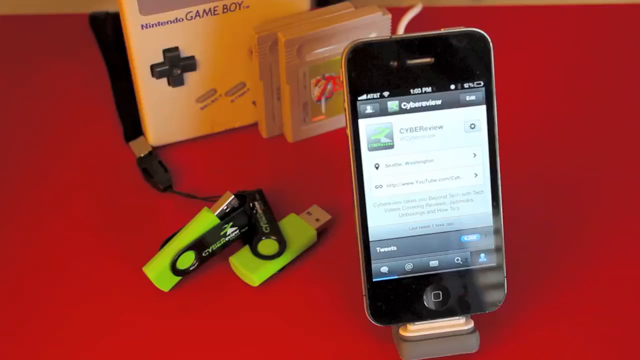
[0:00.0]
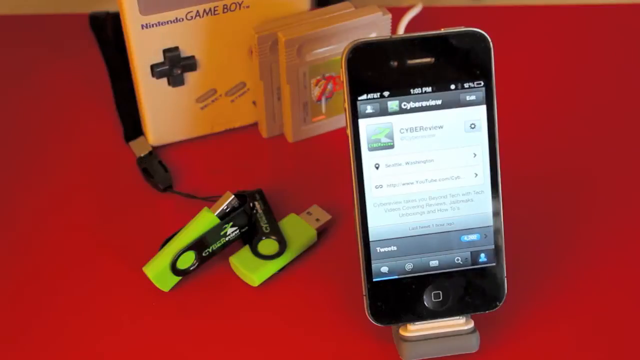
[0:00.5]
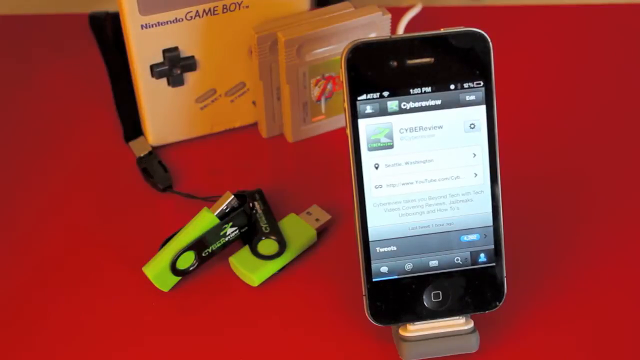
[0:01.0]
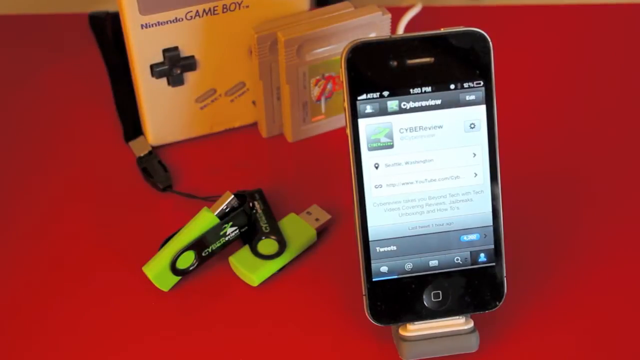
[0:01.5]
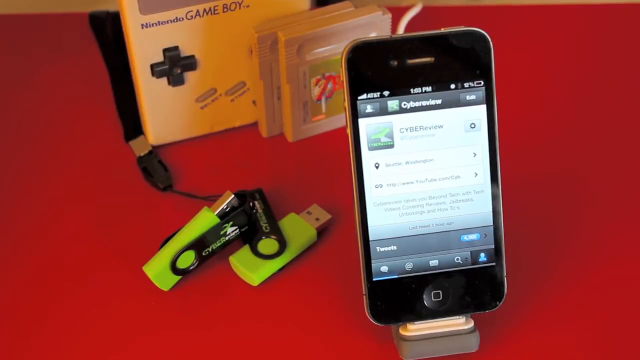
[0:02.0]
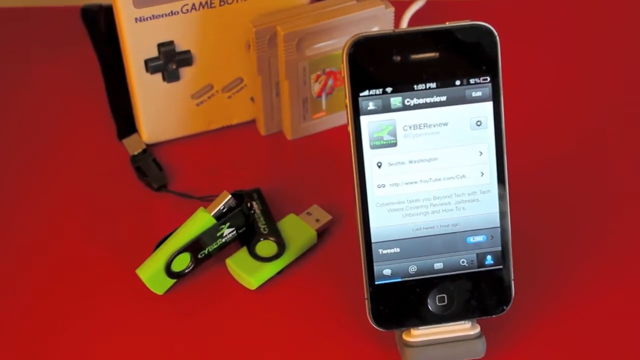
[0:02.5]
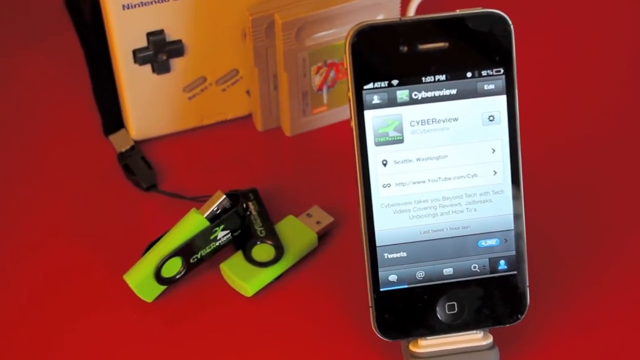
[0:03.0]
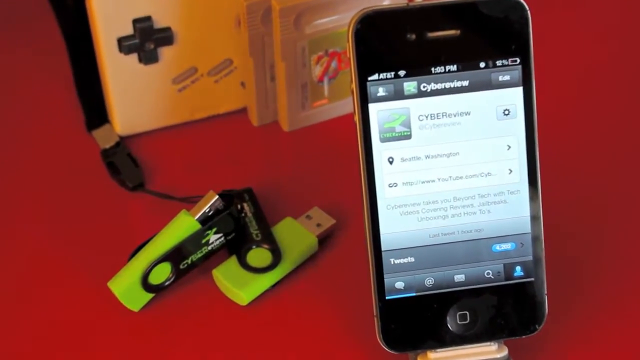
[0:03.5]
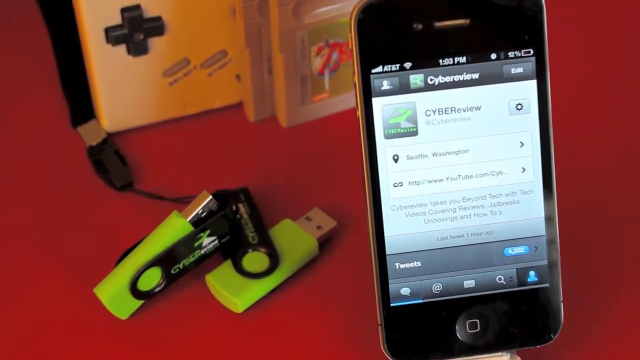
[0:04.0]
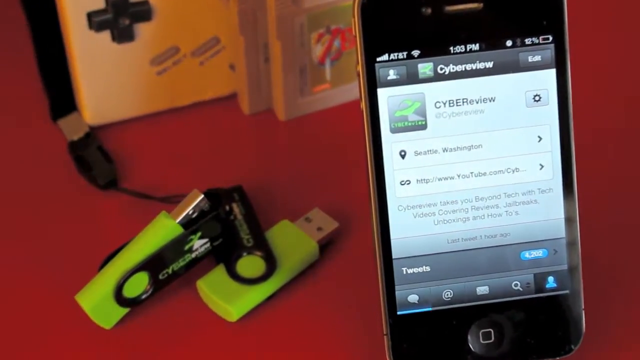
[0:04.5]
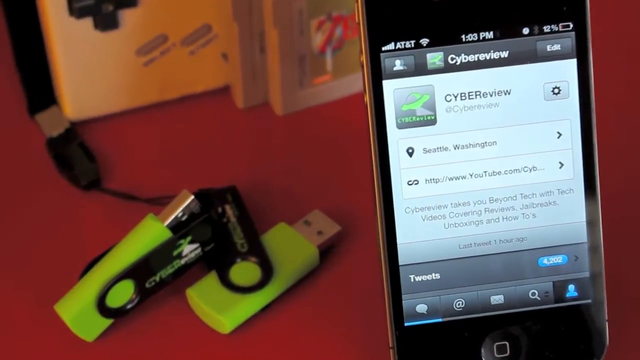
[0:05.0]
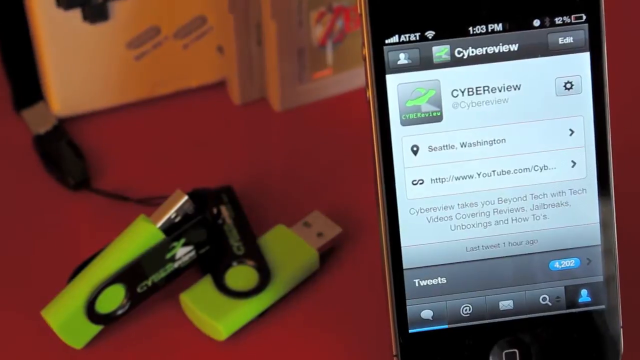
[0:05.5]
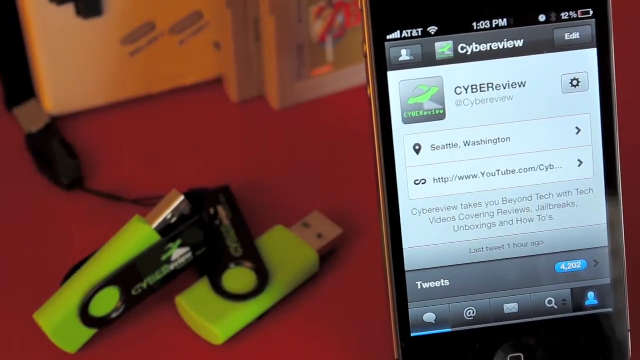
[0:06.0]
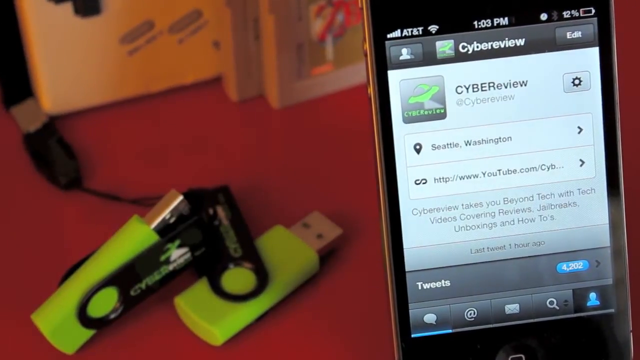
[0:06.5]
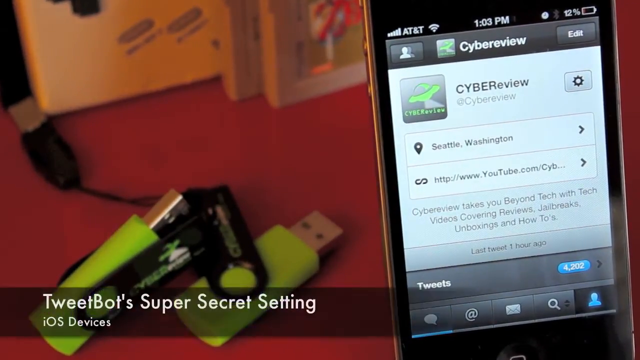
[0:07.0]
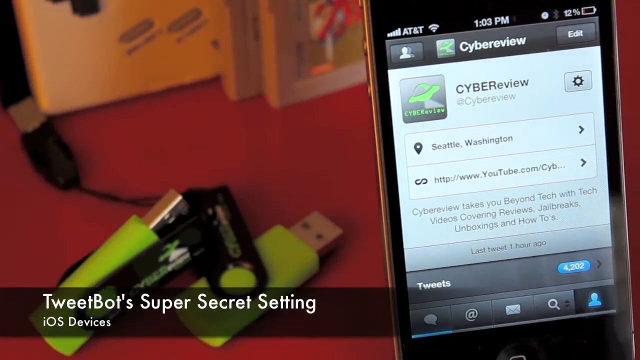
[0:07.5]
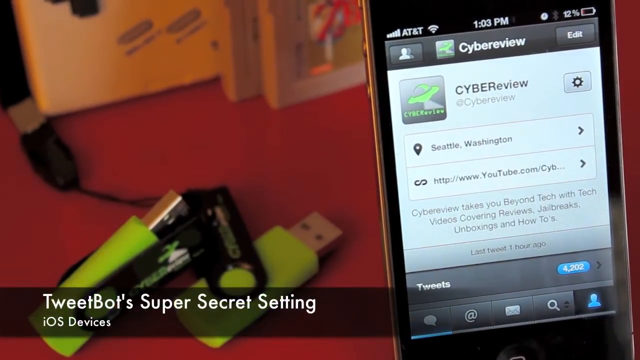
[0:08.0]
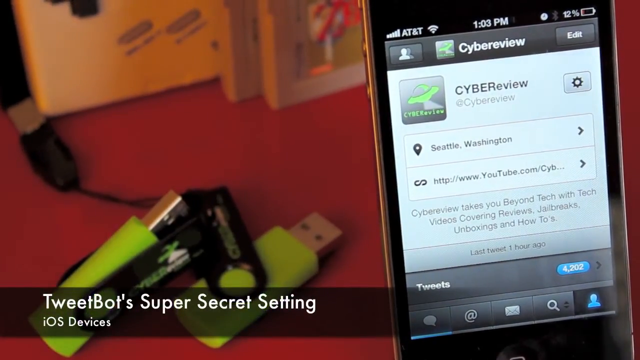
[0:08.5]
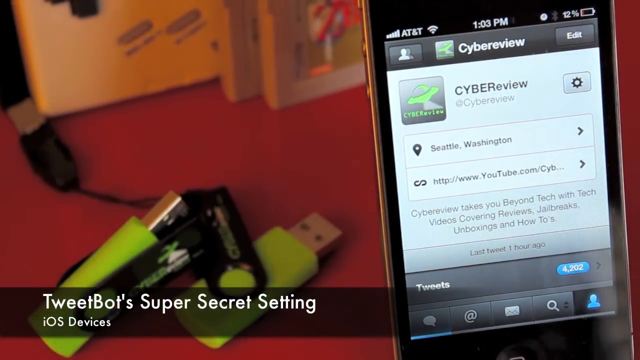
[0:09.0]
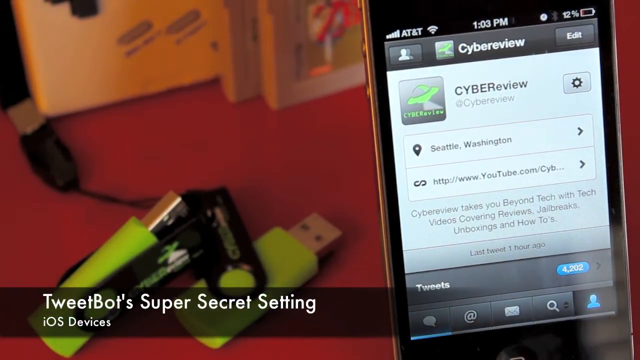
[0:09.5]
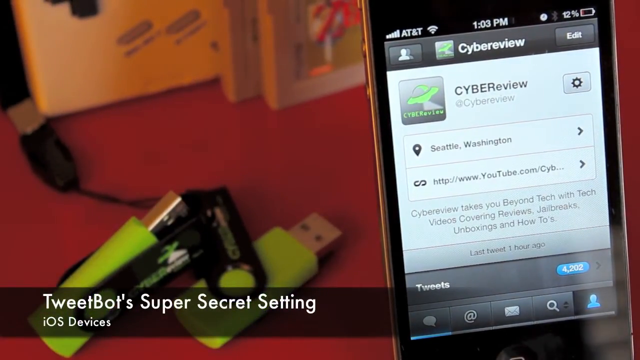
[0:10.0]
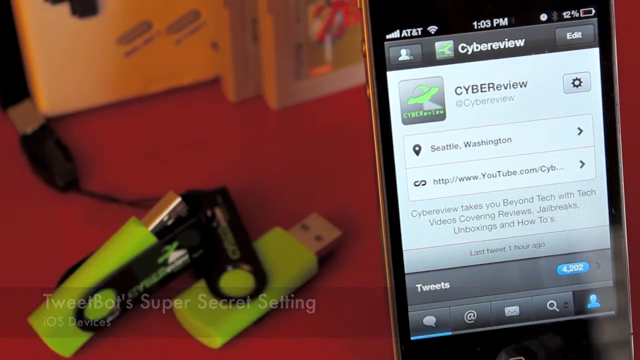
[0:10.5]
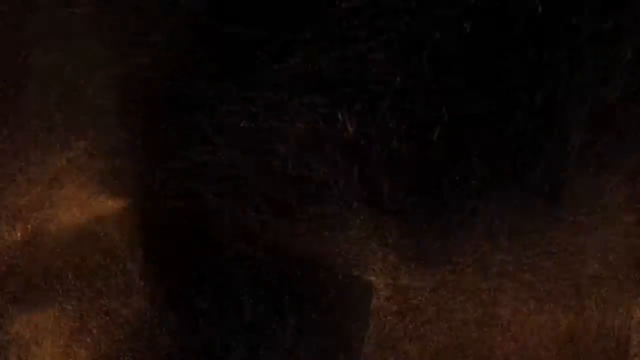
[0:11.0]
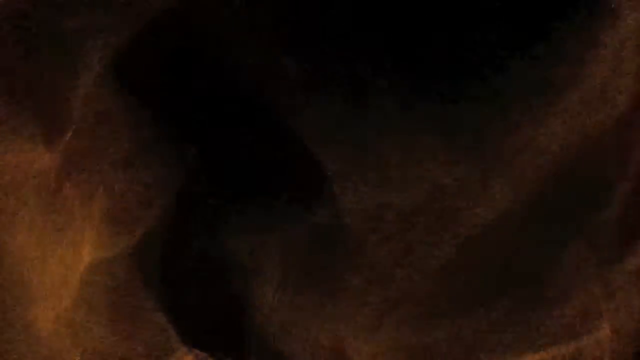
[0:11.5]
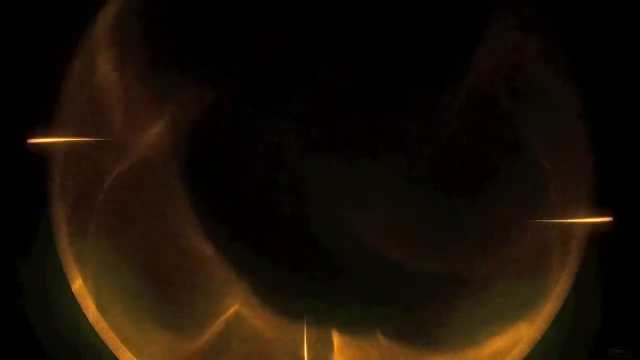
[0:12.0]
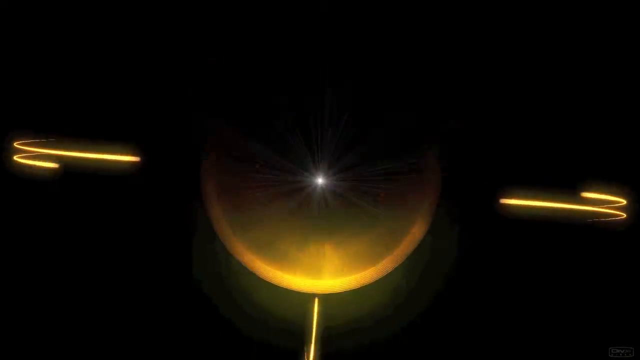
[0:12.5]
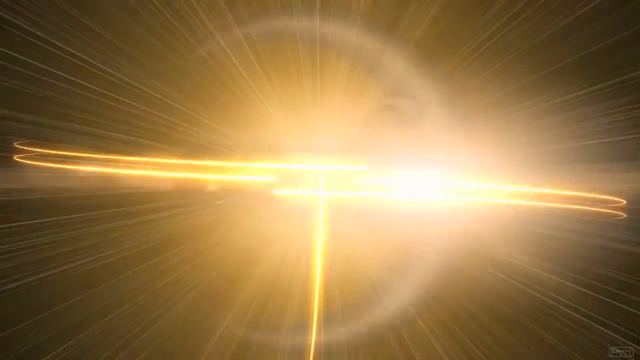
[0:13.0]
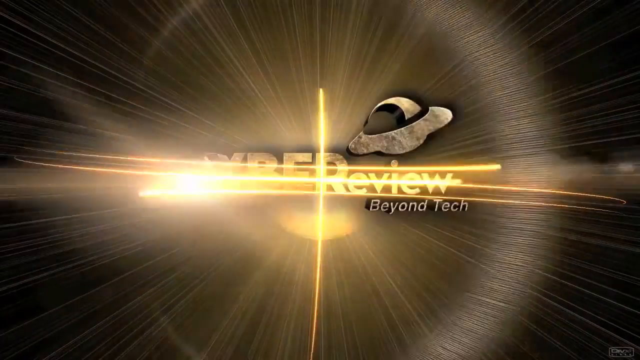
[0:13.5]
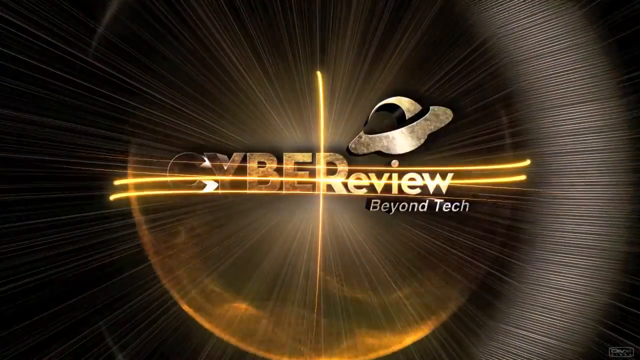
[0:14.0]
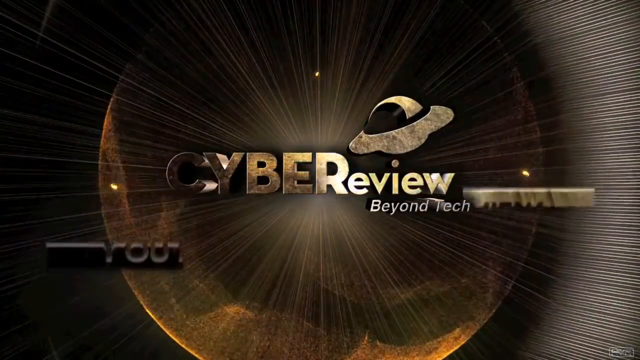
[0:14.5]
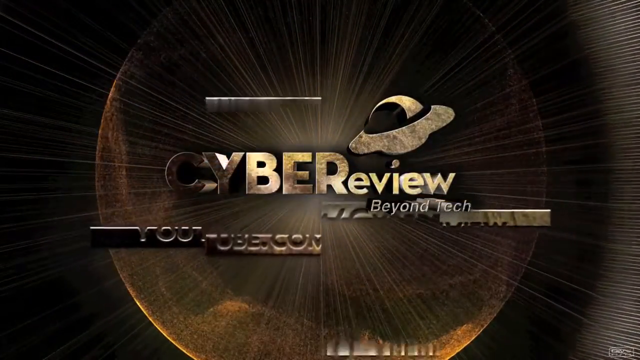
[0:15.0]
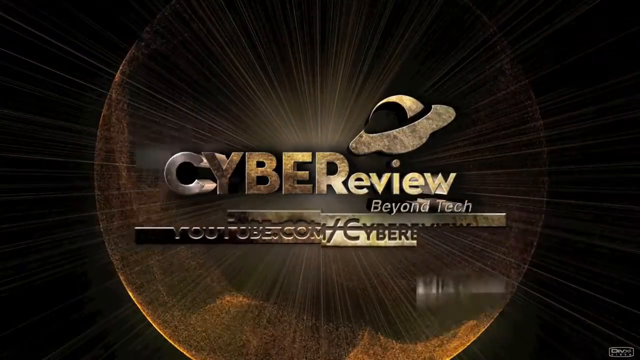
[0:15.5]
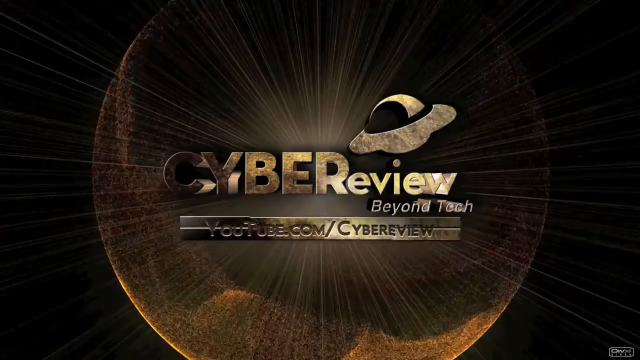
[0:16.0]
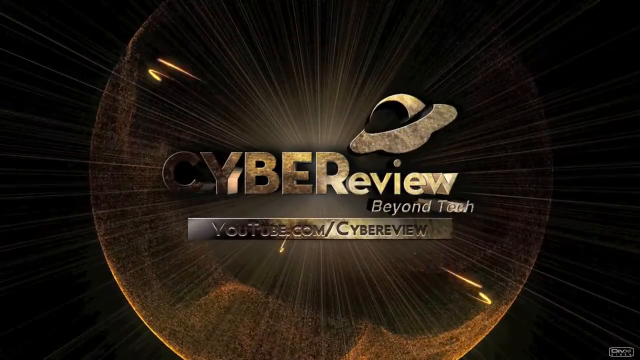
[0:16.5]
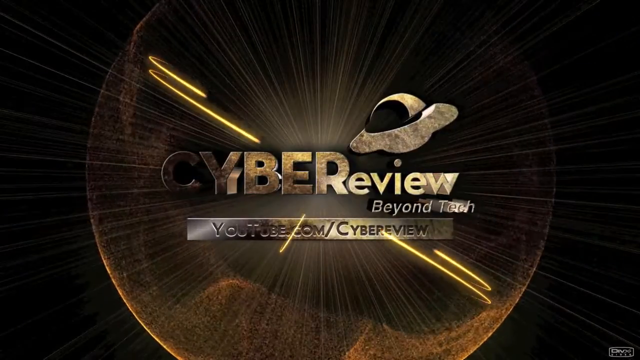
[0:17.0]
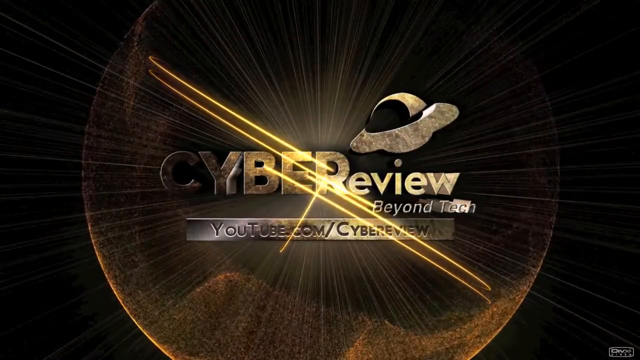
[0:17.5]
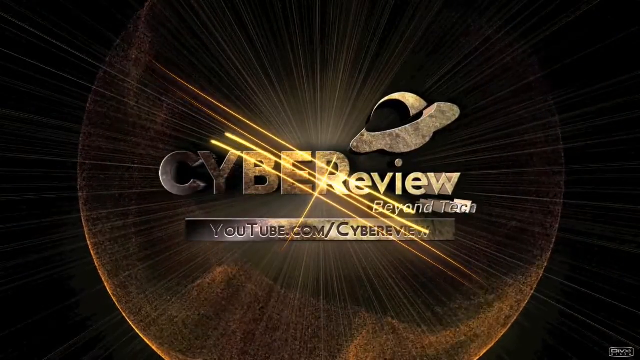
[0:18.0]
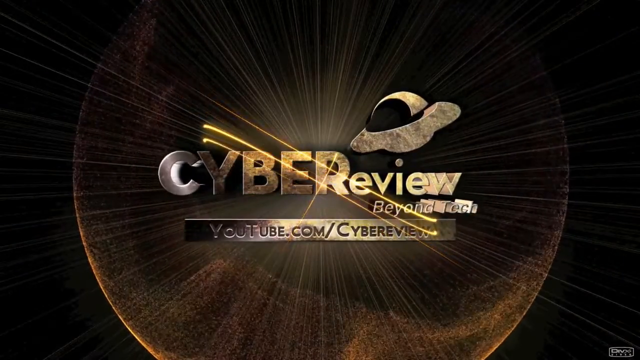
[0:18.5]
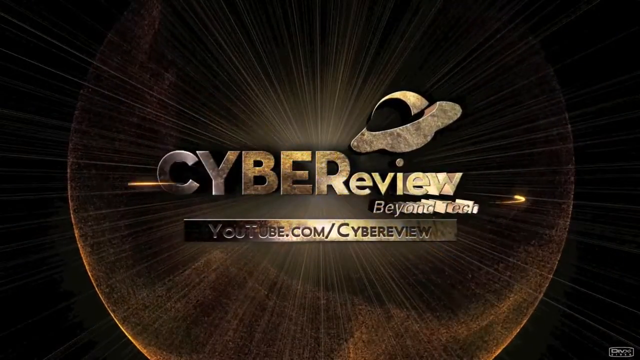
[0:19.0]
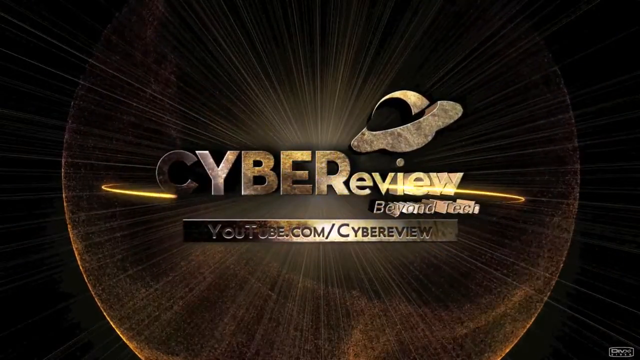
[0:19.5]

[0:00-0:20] A solid red surface, apparently a tabletop, holds two neon yellow thumb drives with black flip-around covers, sitting beside a Nintendo Game Boy and two Game Boy cartridges. In front of all of them is what looks to be an old iPhone, possibly a 4, 5 or 6, set up on an app called Cyber Review. As the video starts, a reflection moves around, and the view zooms in on the phone, where it says "Cyber Review" and "Seattle, Washington" and gives a YouTube.com address. The scene then switches to what looks like a burst of light coming out behind or around the words "cyber review beyond tech," with a small alien spaceship image up in the corner. The words "youtube.com cyber view" come up, and more spinning lights go across the top for a science fiction effect.